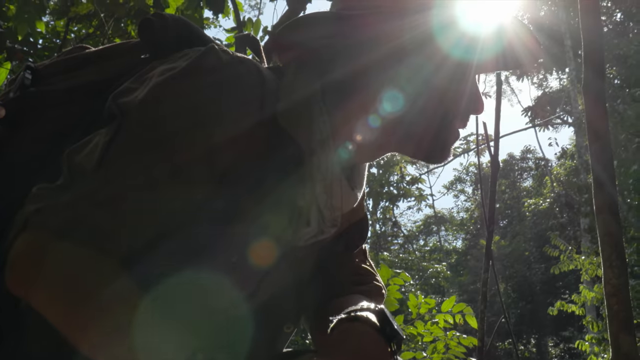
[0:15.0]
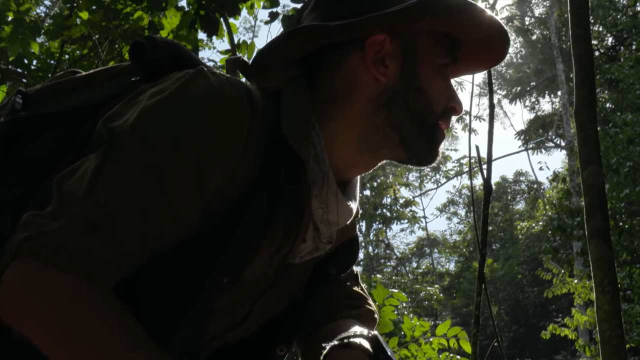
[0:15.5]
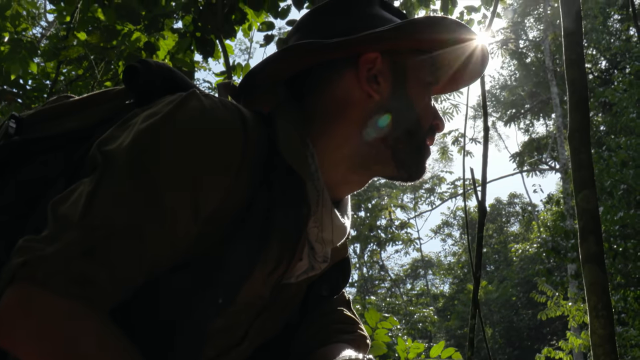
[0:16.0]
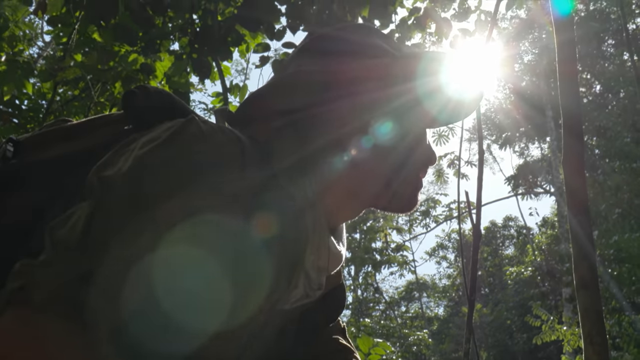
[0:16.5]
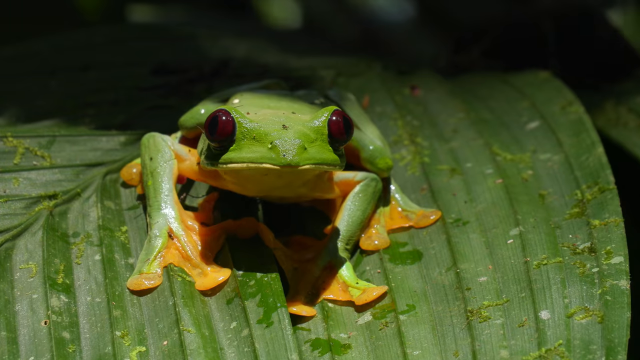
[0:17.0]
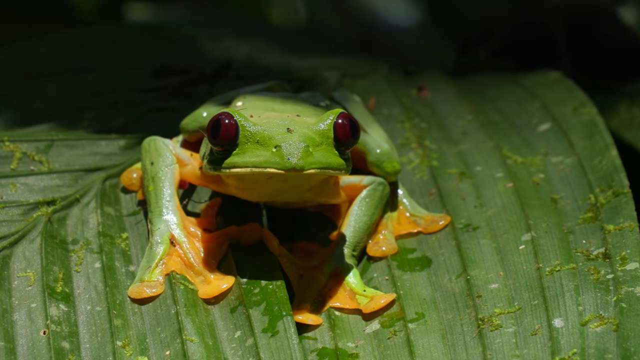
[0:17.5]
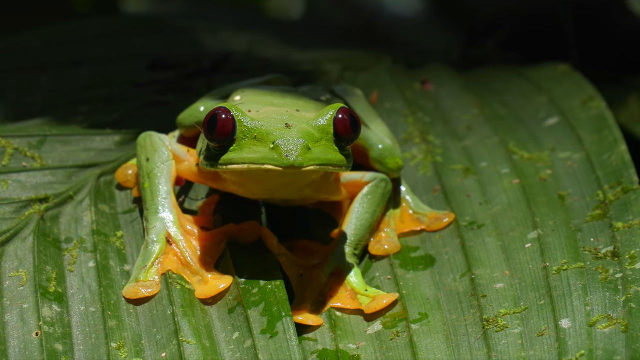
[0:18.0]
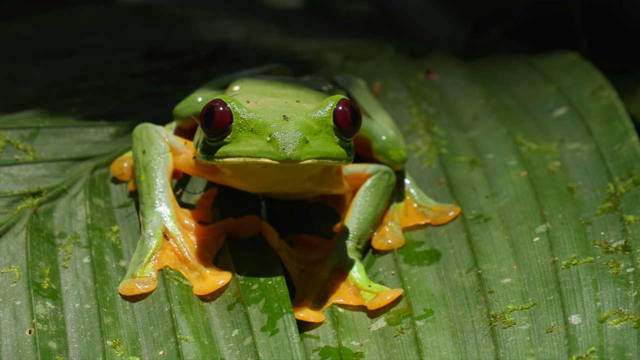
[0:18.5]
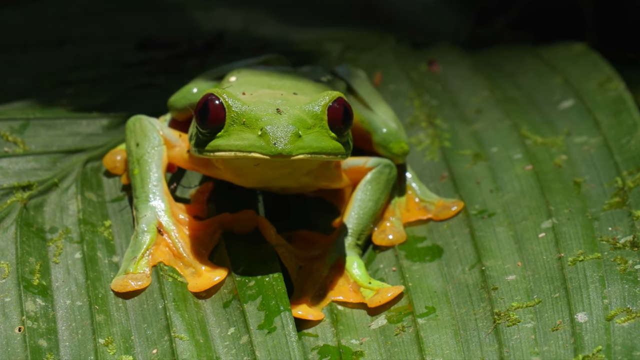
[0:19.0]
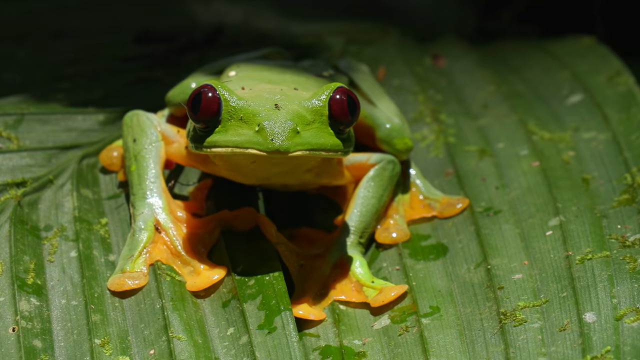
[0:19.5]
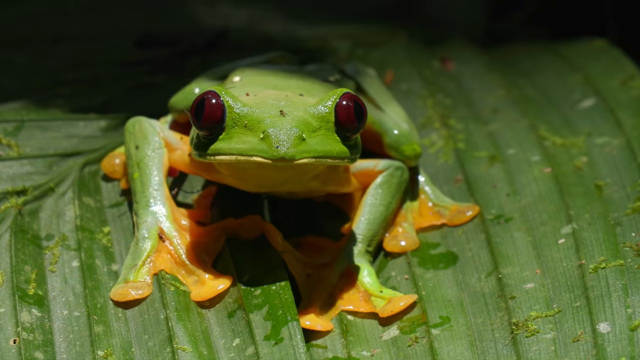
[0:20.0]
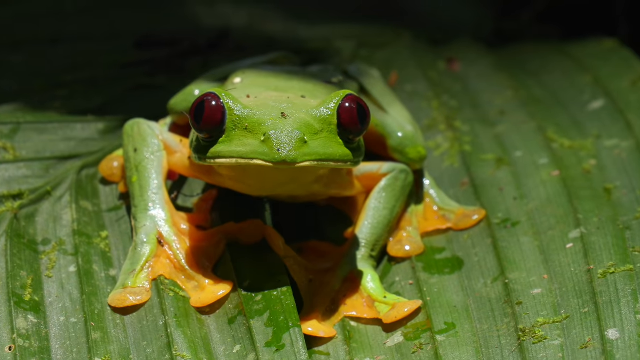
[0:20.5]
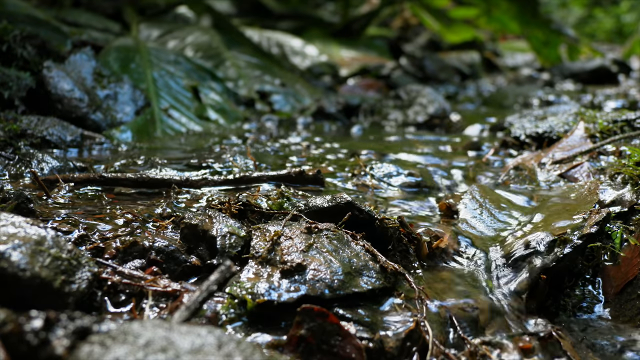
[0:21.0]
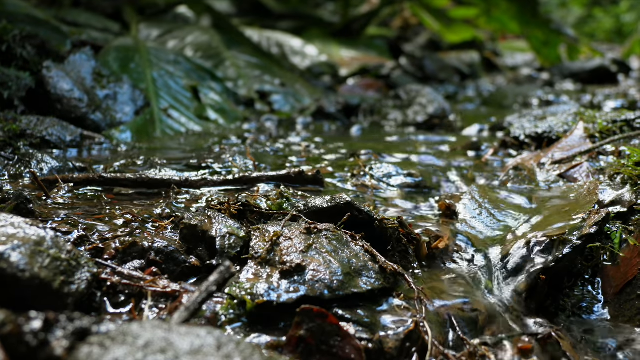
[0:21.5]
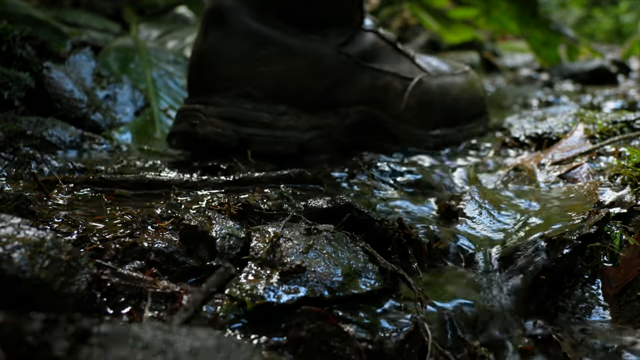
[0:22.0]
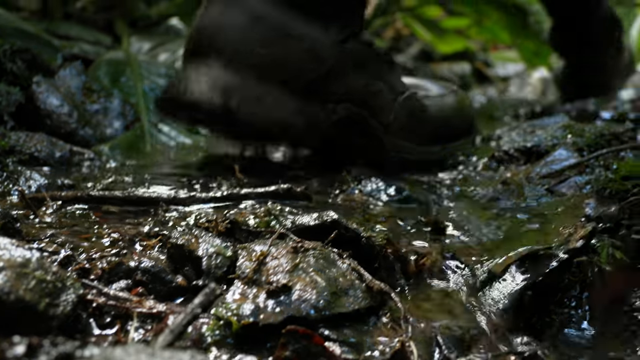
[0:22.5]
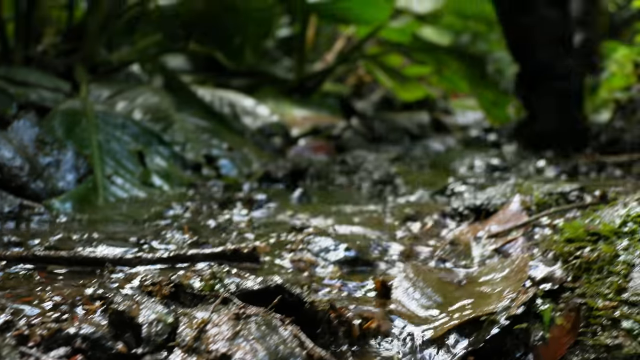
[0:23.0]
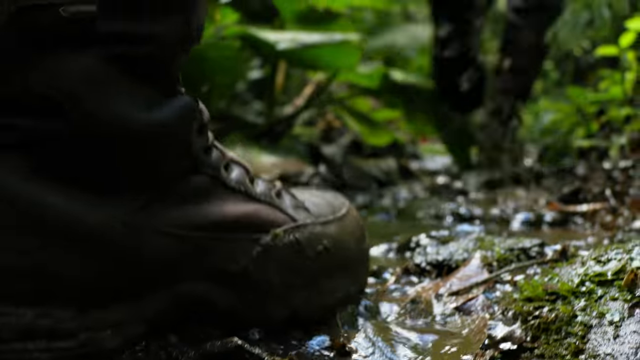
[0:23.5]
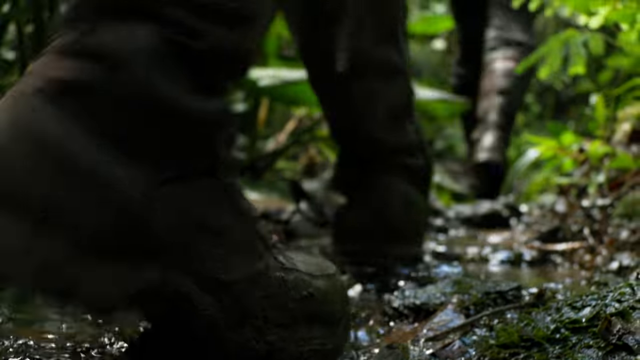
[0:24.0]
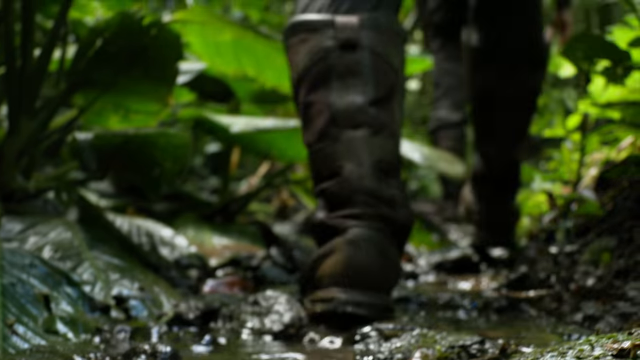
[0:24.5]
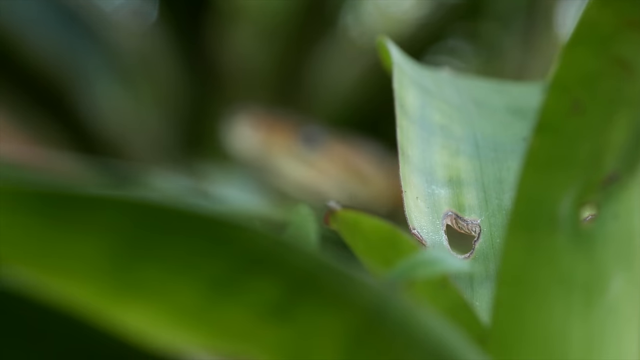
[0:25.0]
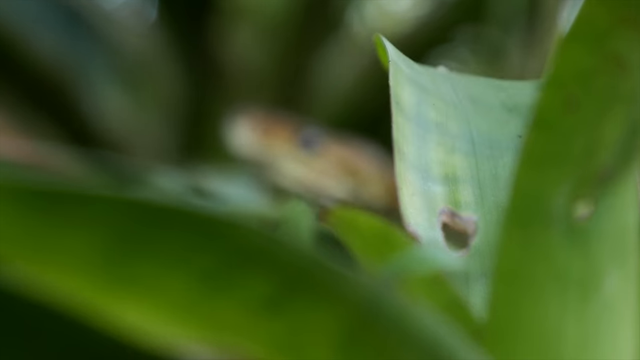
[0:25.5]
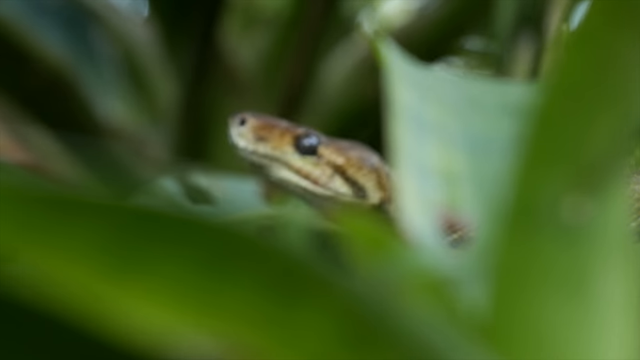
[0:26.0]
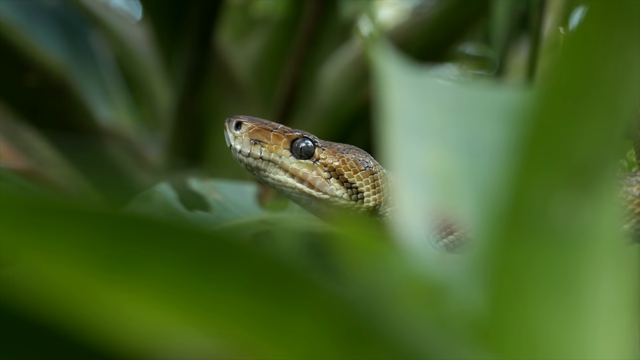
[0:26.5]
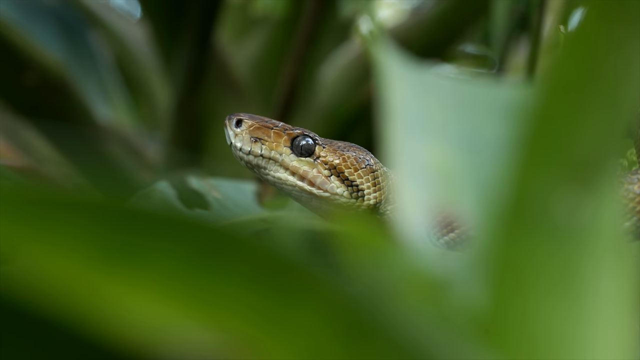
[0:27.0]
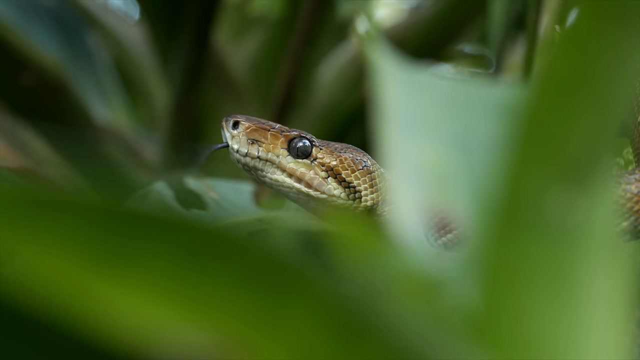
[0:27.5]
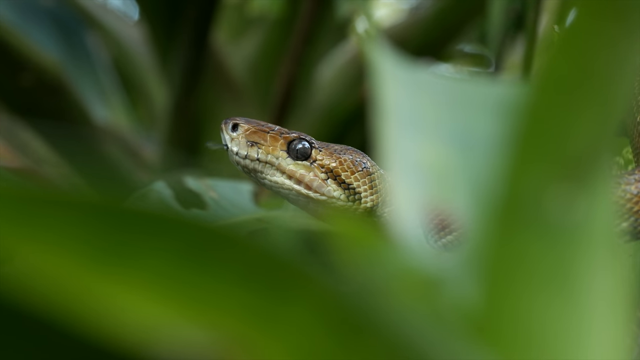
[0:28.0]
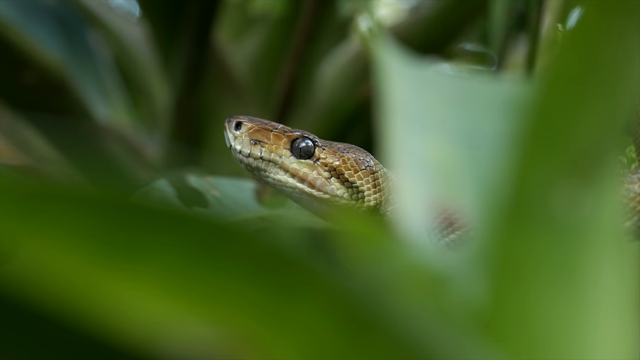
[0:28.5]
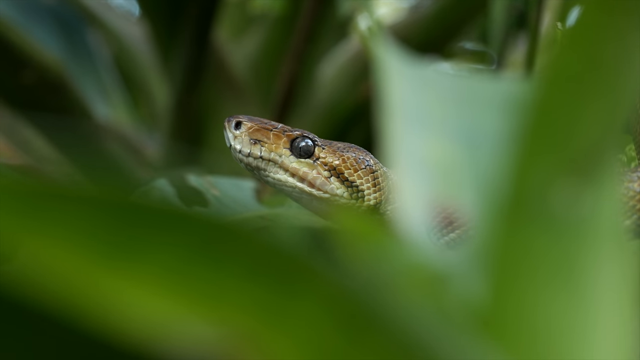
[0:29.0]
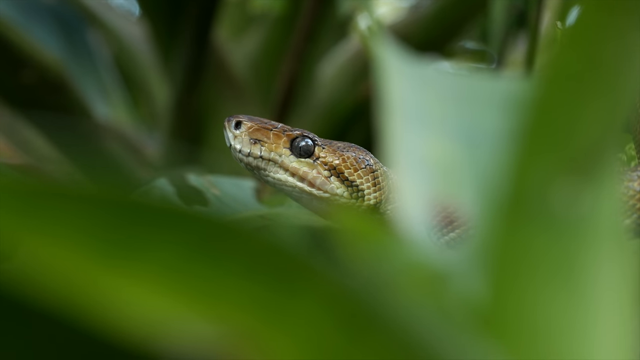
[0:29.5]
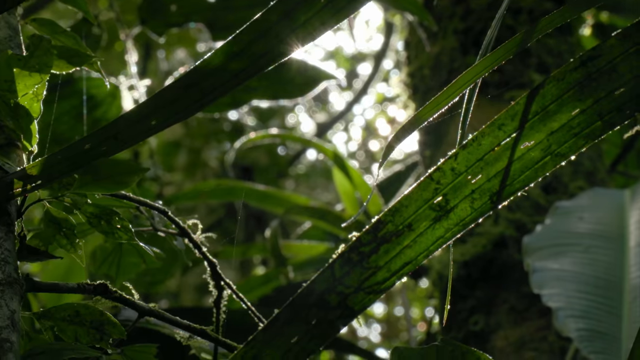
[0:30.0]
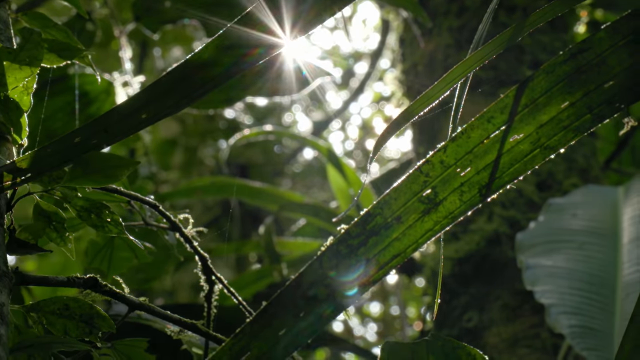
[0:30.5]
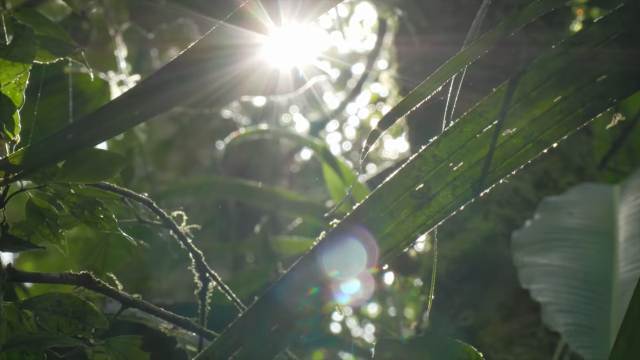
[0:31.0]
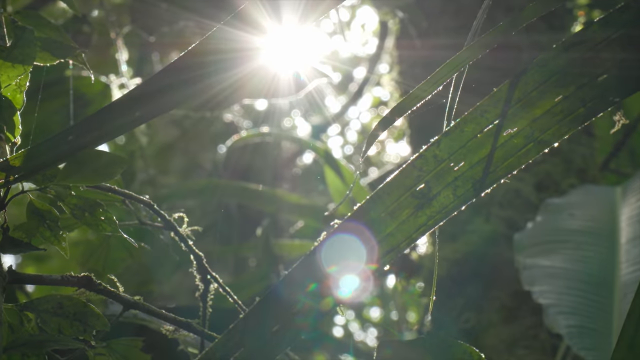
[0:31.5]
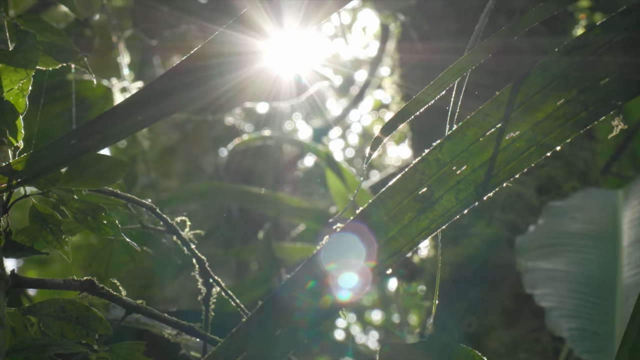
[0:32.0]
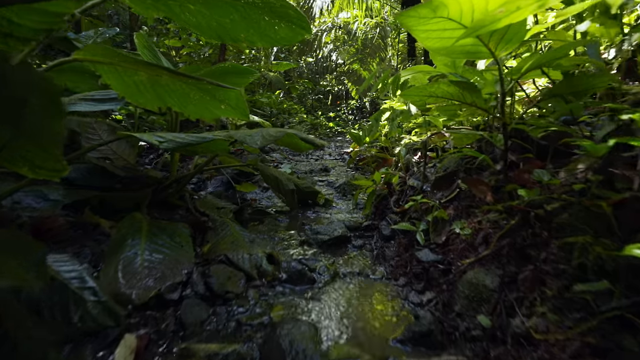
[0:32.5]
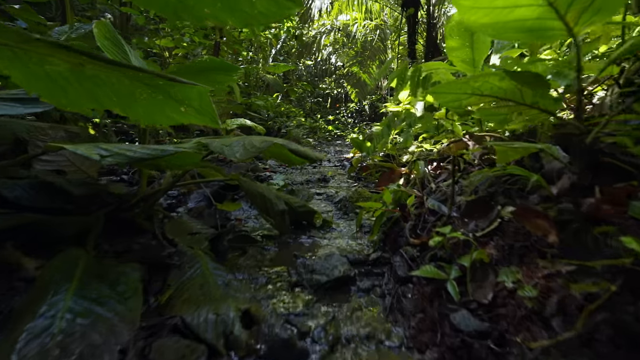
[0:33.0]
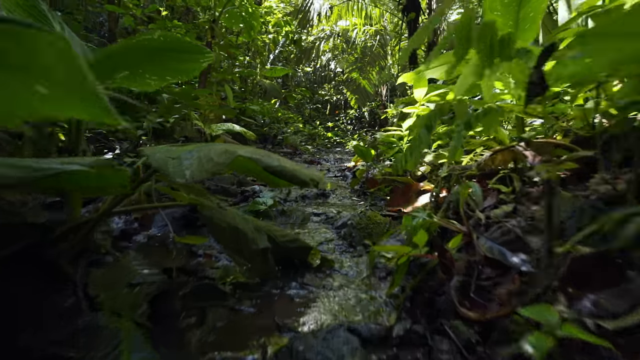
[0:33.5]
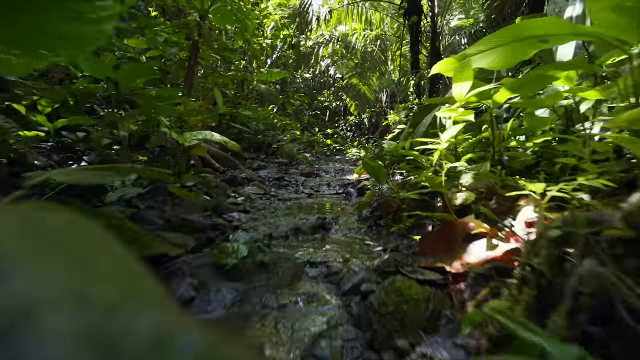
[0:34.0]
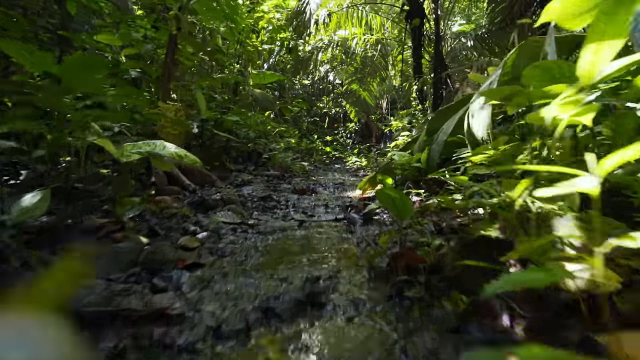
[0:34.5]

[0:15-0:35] A green frog is shown first; it is bright green with orange feet and red eyes. Then some people walk through a wet environment, probably a very small stream or near a larger river. In a different scene, the head of a snake is shown, kind of looking for something, with its eyes open and its tongue out. Then people are seen again walking through the stream. The environment is natural, with no signs of civilization or man-made objects, very green and leafy. The sun is shining, the sky appears clear, there are no signs of rain, and the weather appears to be warm.